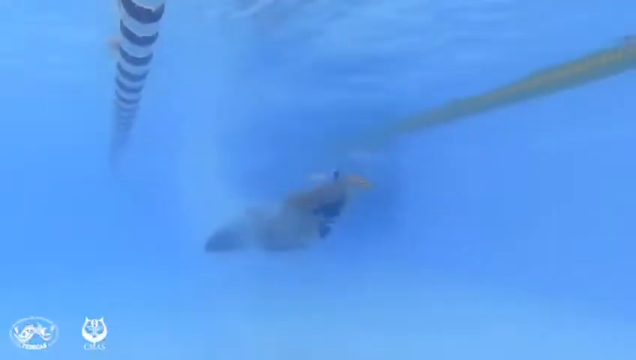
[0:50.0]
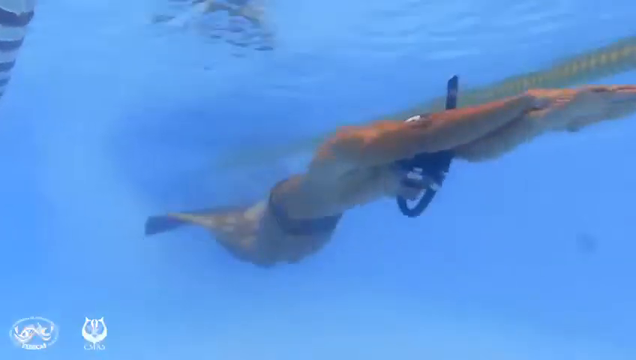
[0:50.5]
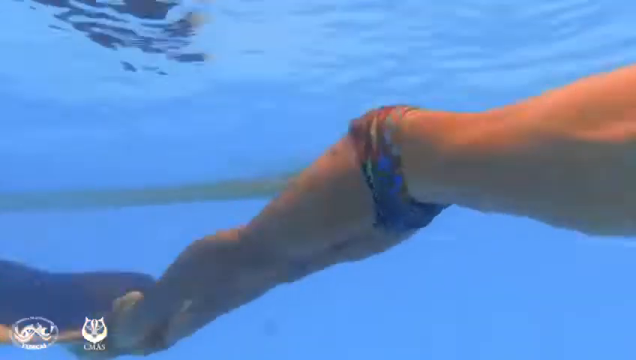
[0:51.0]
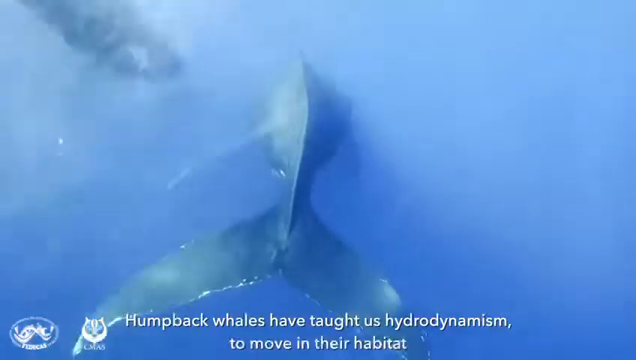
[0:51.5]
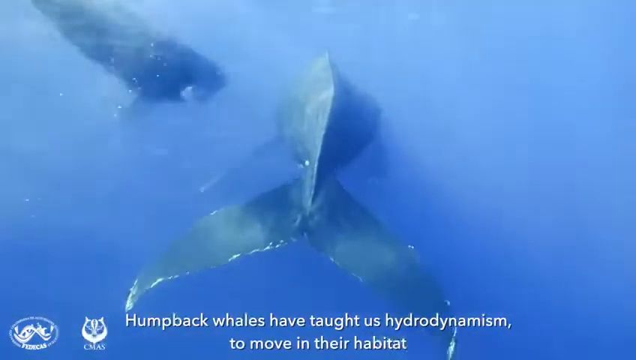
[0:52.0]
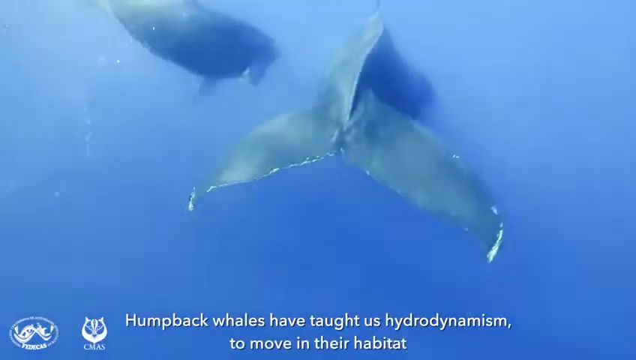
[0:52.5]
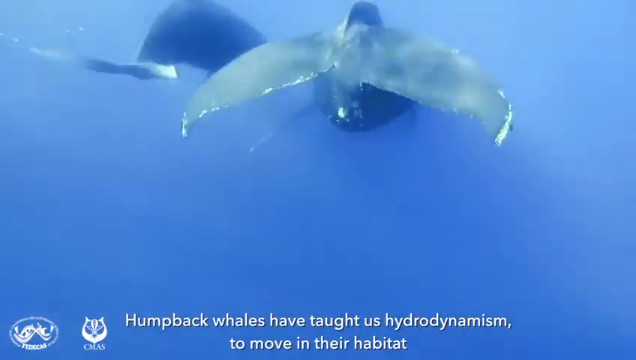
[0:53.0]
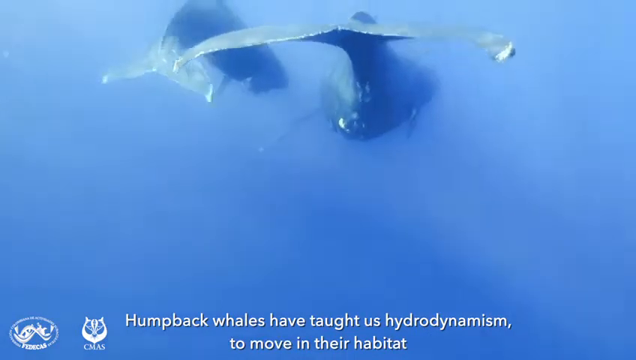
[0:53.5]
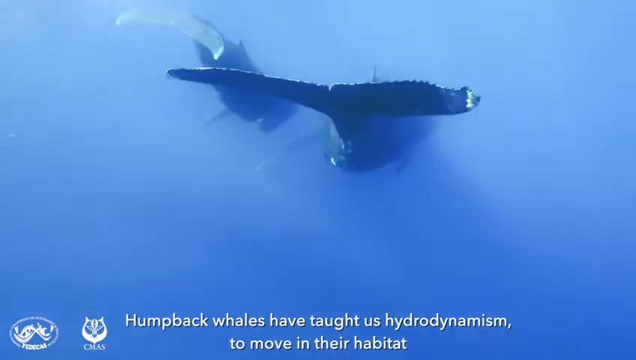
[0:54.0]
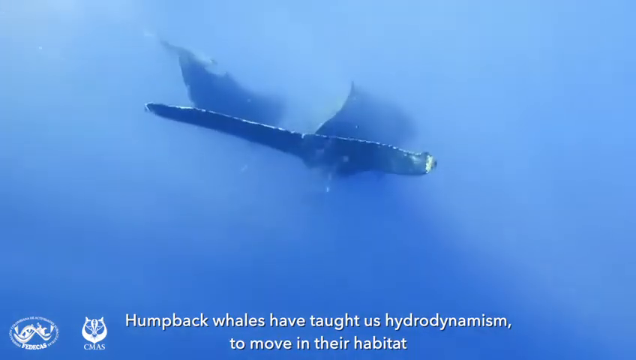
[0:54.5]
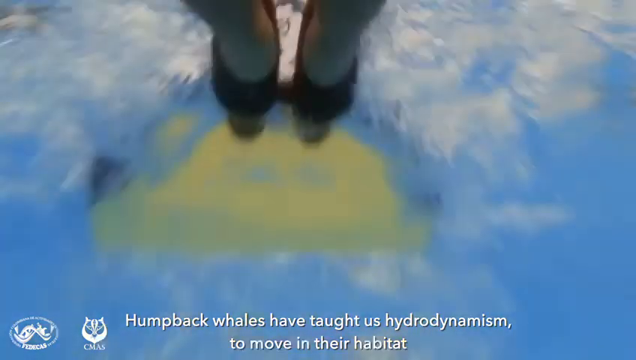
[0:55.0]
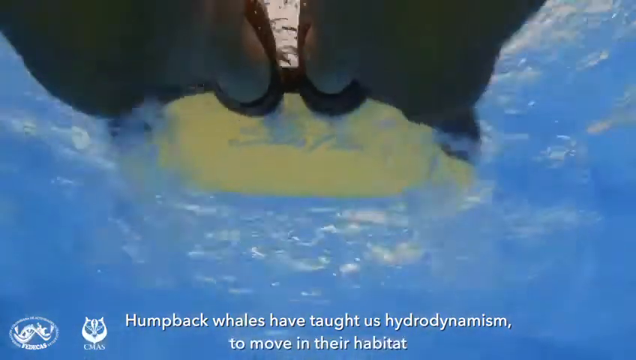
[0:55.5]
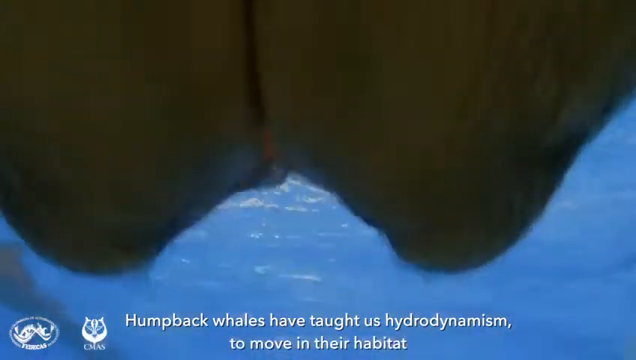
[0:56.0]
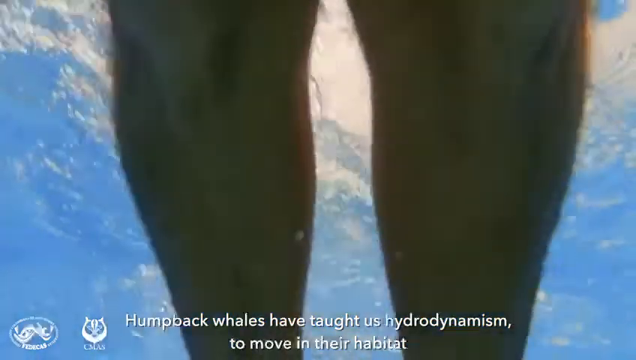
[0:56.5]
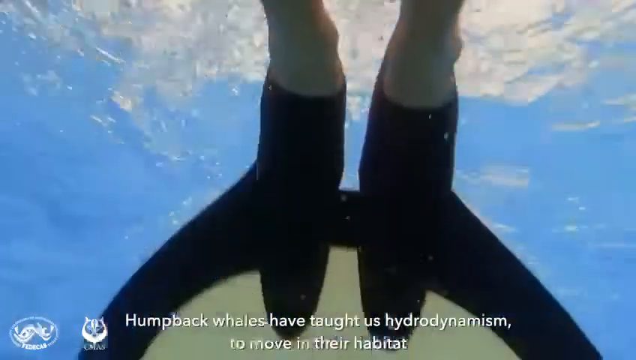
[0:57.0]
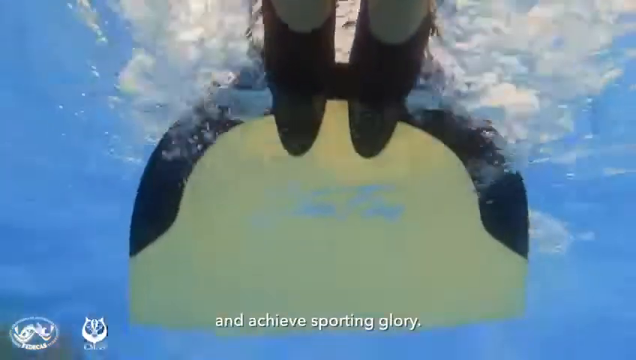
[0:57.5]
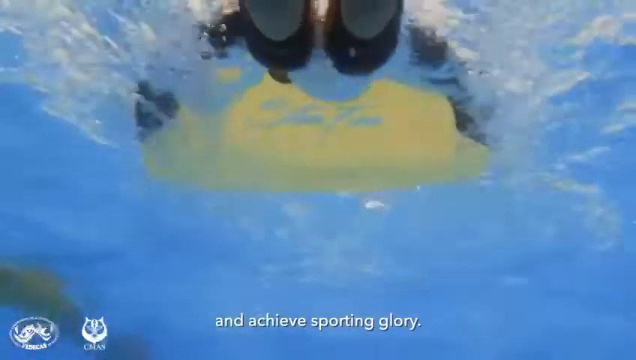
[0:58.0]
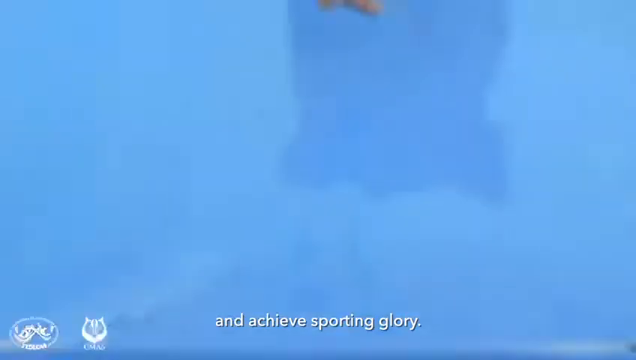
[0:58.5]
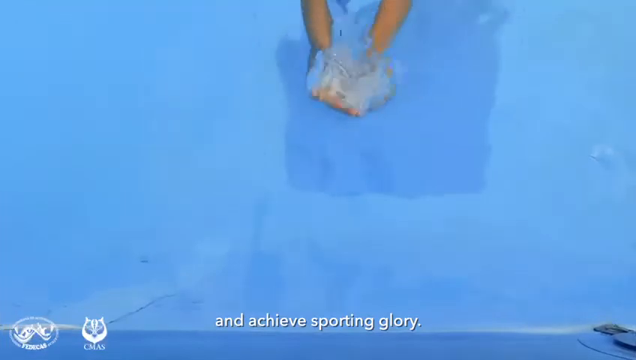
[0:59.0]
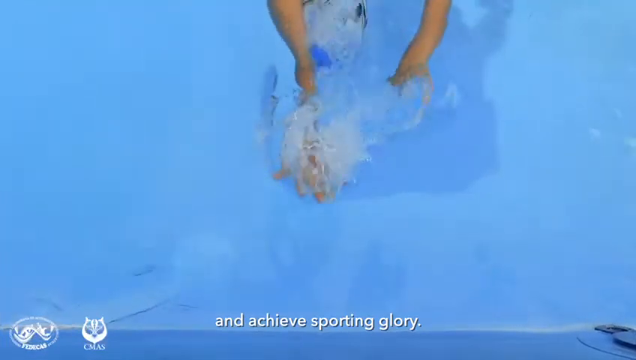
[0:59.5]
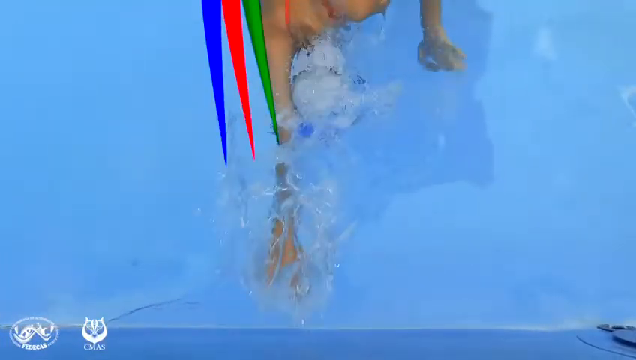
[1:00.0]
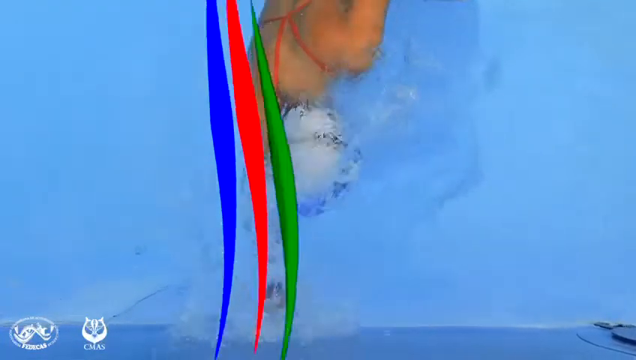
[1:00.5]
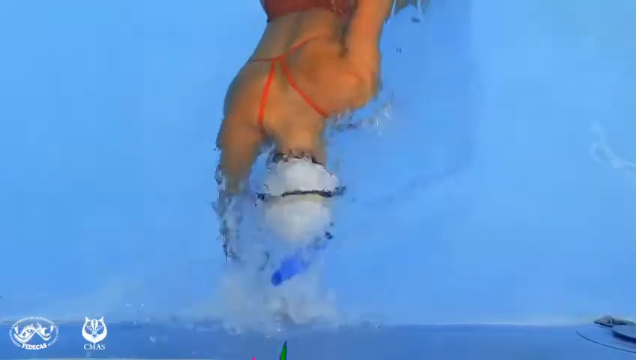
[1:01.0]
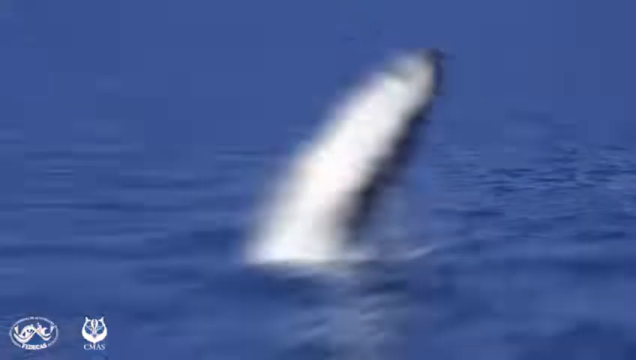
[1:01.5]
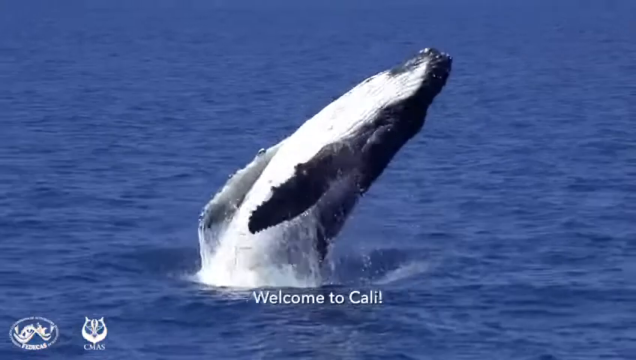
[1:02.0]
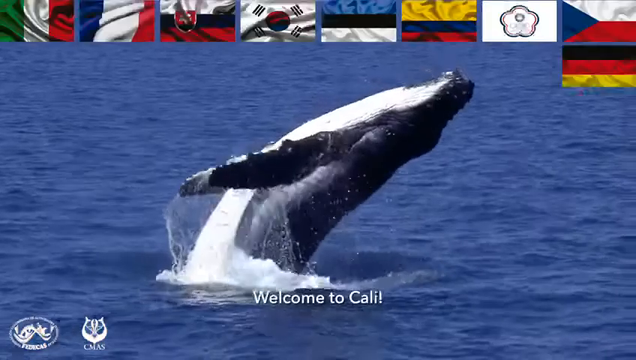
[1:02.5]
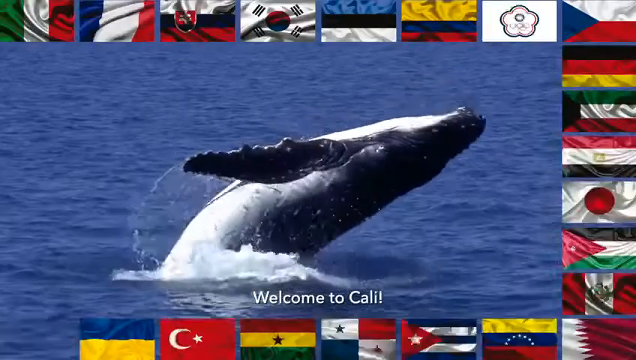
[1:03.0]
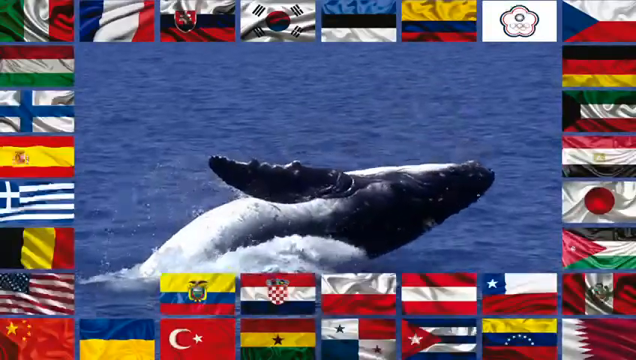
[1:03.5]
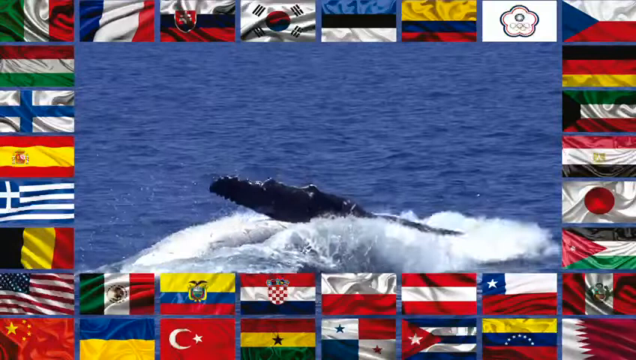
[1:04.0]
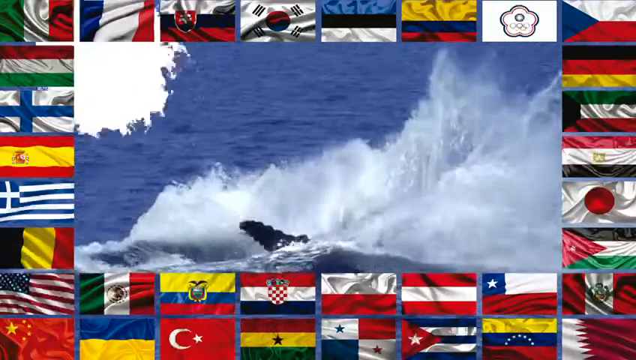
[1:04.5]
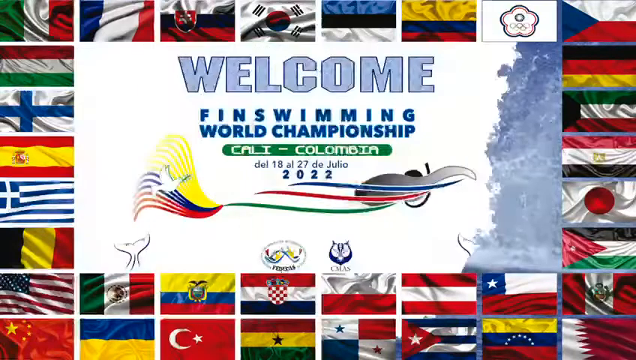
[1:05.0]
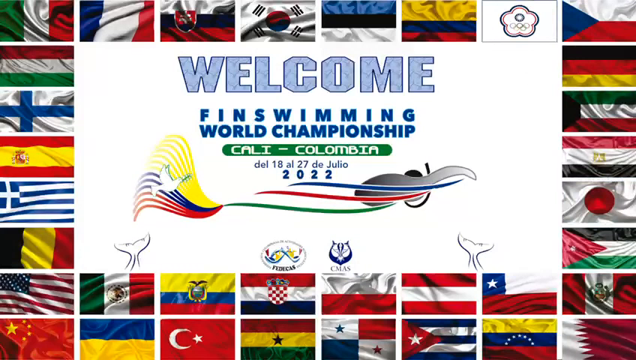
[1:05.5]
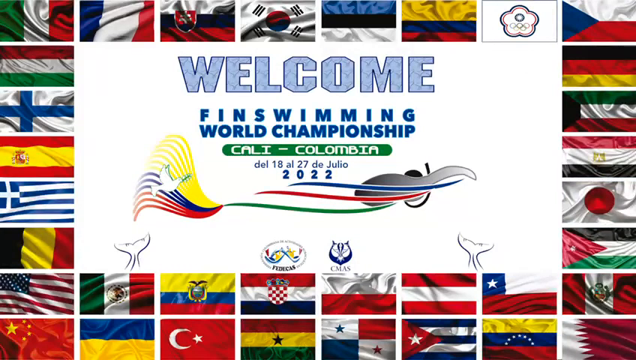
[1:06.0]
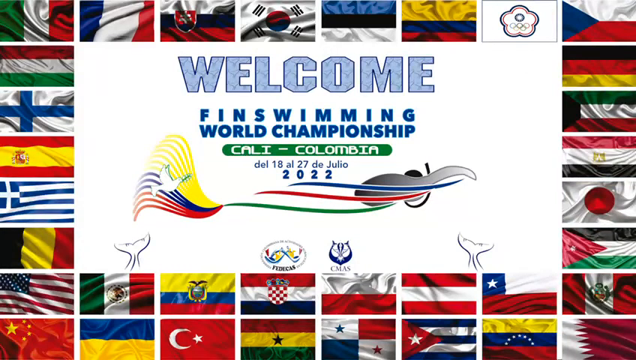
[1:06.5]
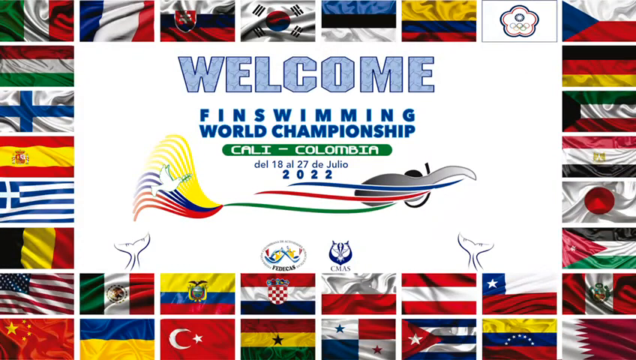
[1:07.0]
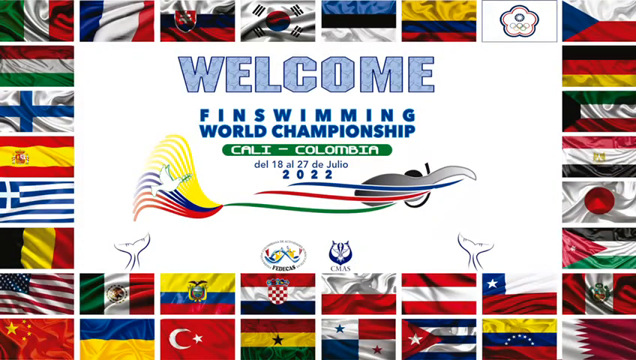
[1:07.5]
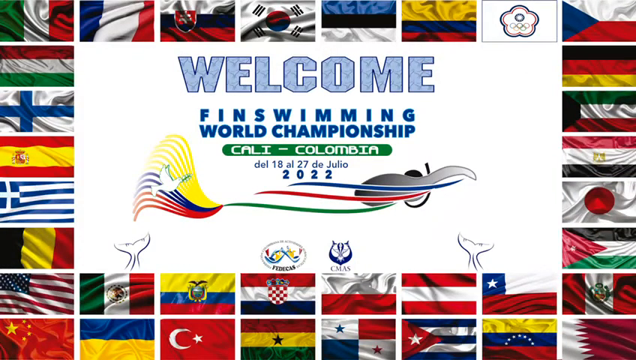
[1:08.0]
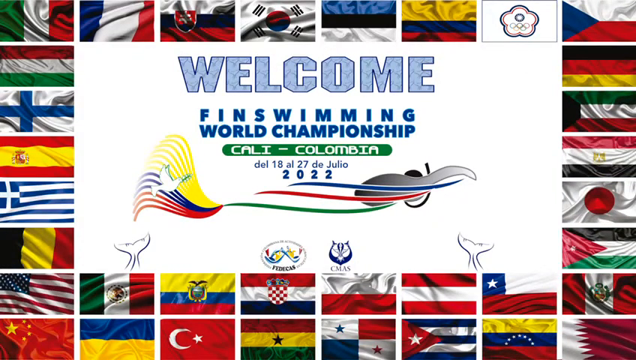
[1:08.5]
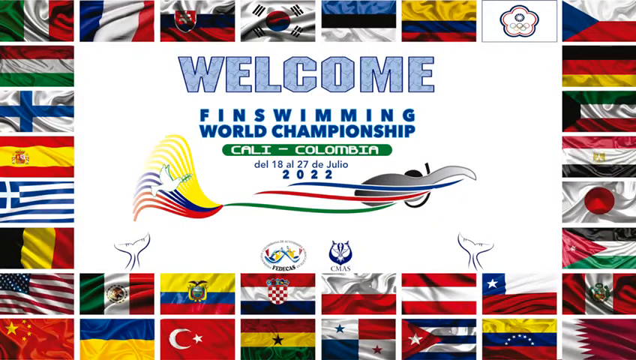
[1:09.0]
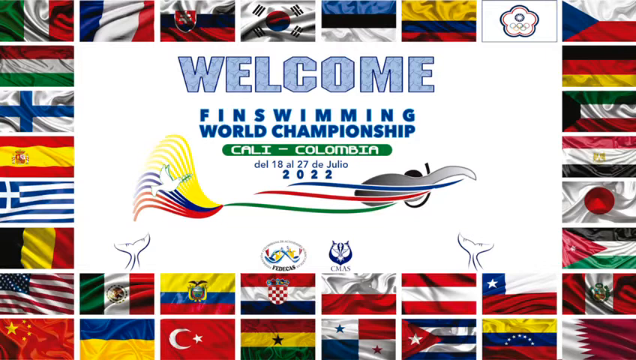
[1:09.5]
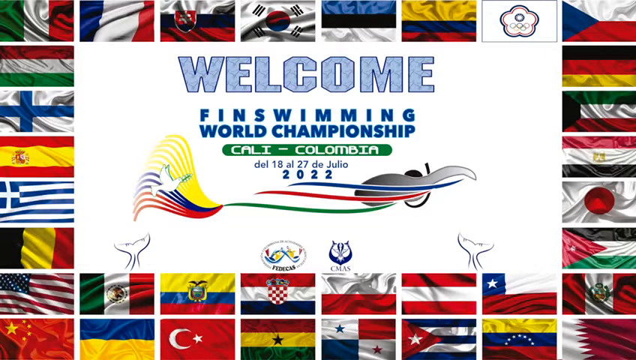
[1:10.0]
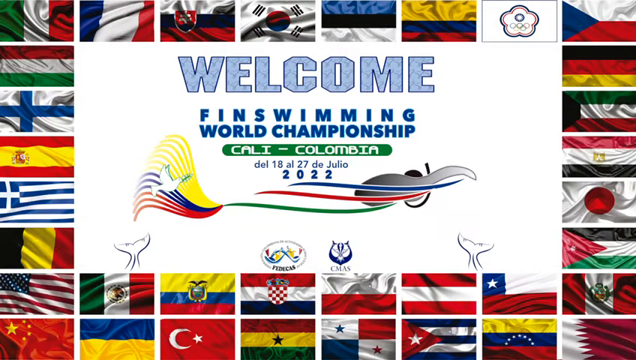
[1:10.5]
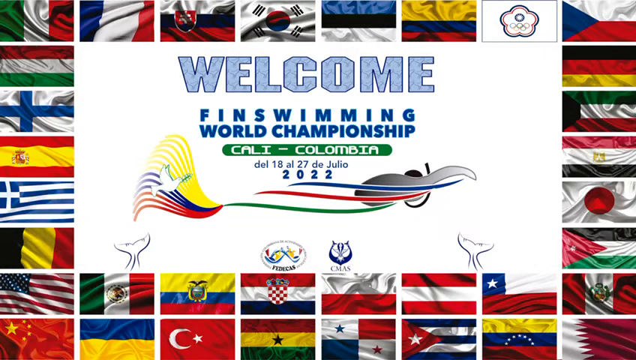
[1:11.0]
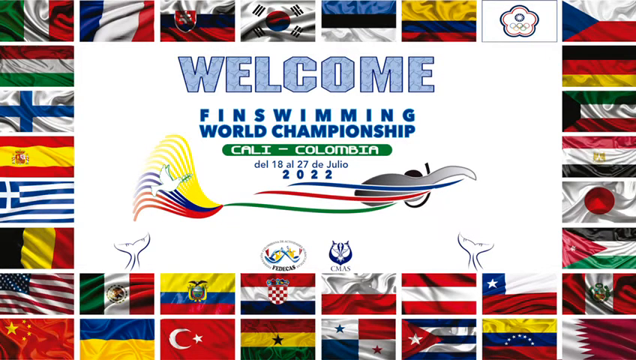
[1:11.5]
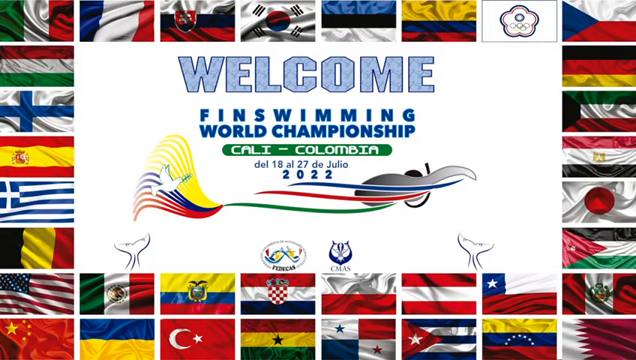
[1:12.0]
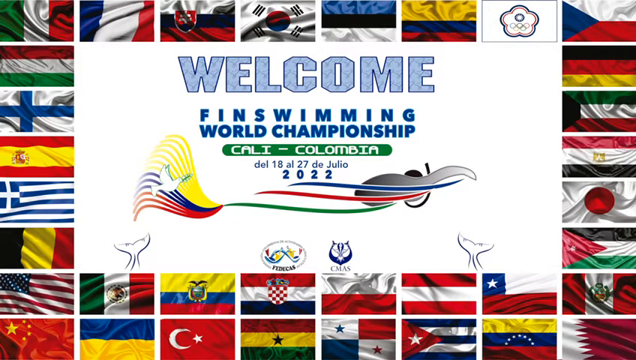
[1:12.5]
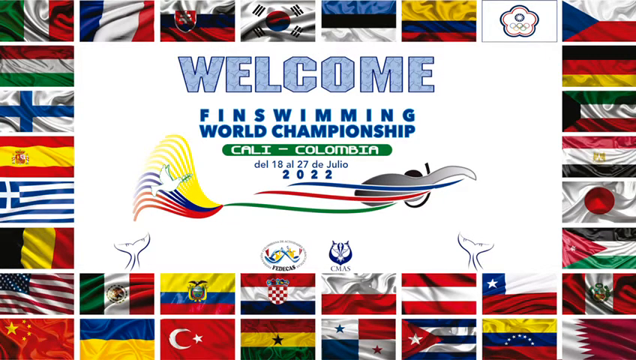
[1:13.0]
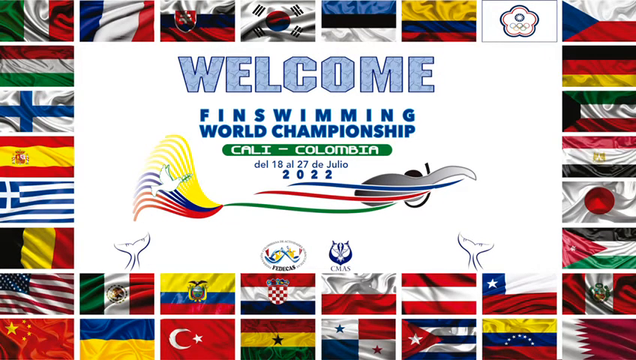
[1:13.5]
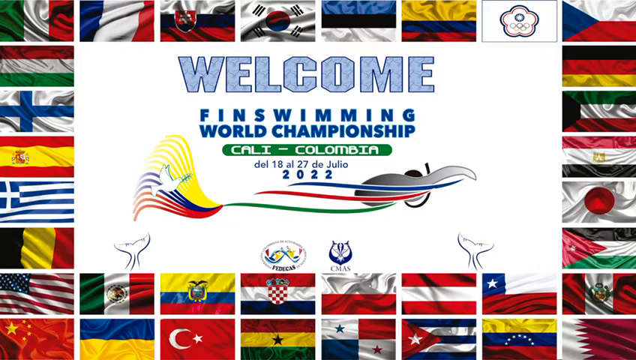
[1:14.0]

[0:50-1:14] Text reads "humpback whales have taught us hydrodynamism," and then a whale jumps up out of the water. Text then reads "welcome fin swimming world championship Cali, Columbia." The swimmers swim with fins that resemble a whale's fin: rather than a separate fin on each foot, both feet go into a single one-piece fin, apparently modeled on the structure of a humpback whale. The video looks like it is from 2022.